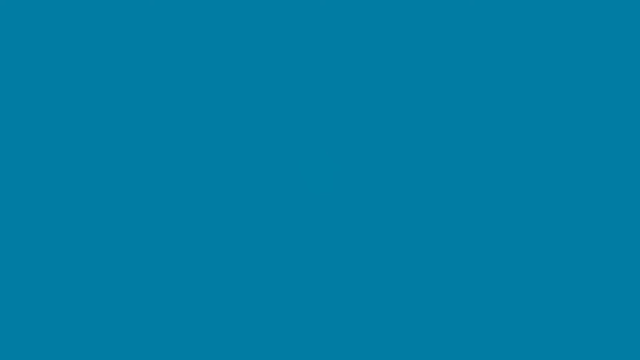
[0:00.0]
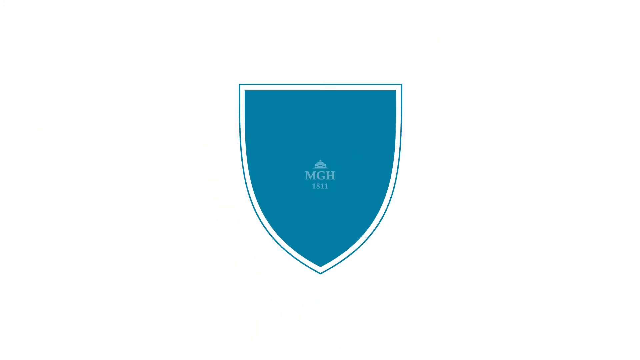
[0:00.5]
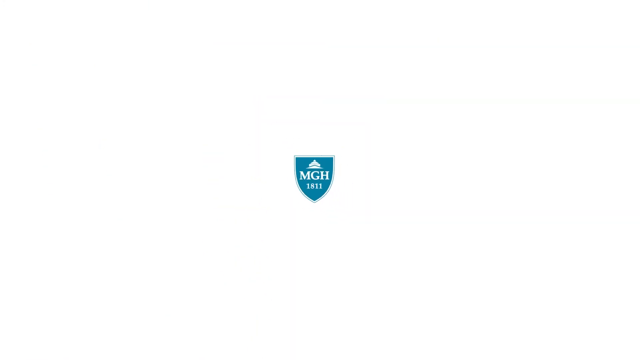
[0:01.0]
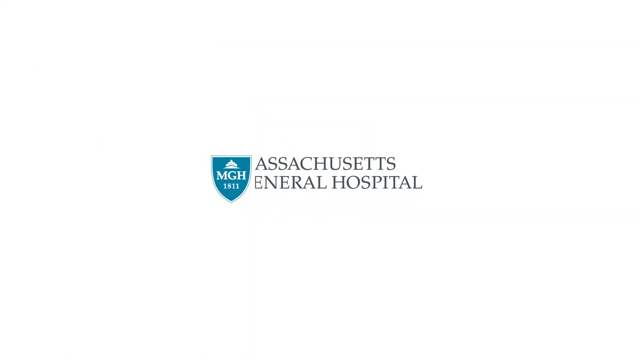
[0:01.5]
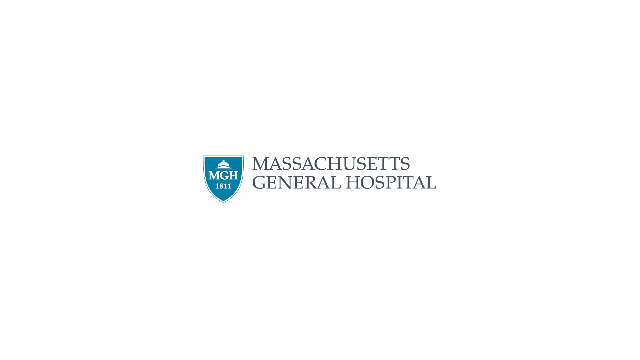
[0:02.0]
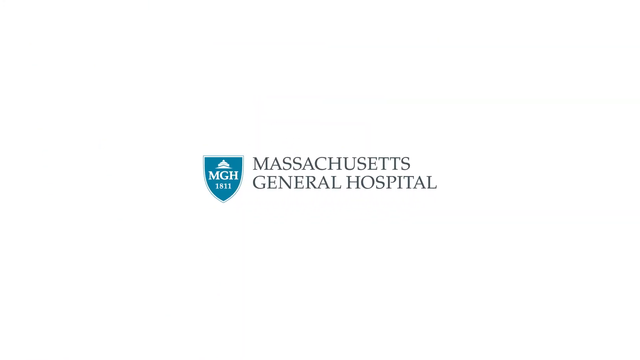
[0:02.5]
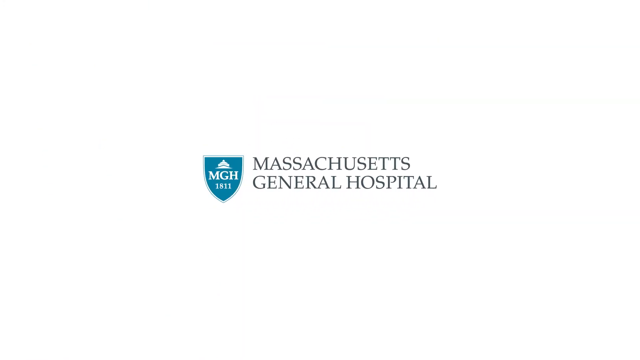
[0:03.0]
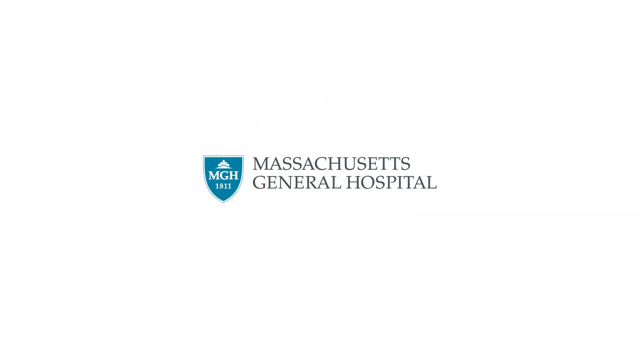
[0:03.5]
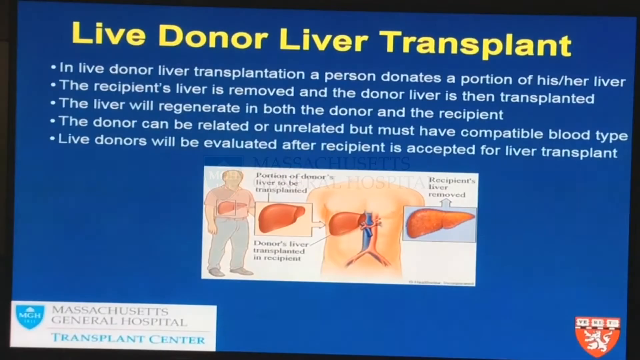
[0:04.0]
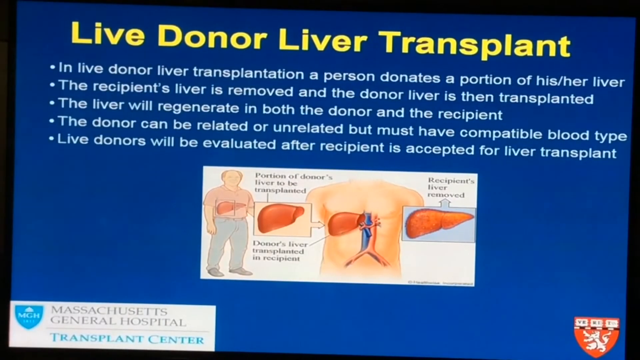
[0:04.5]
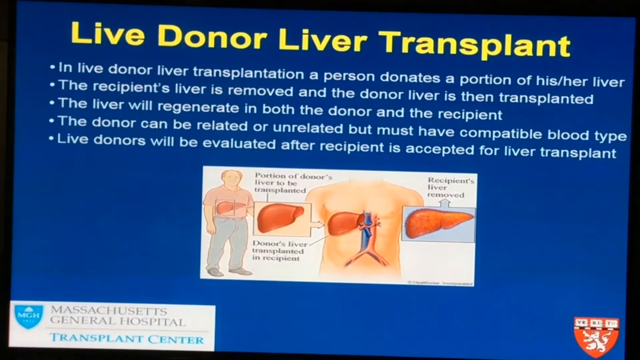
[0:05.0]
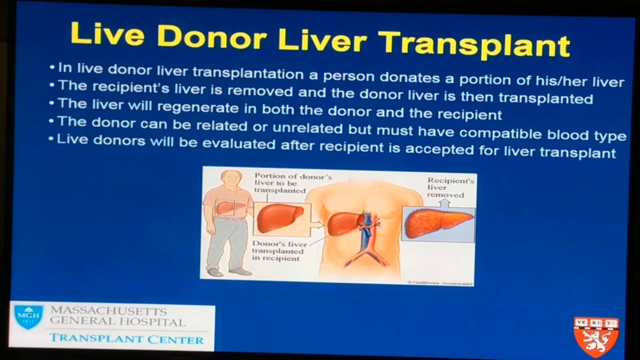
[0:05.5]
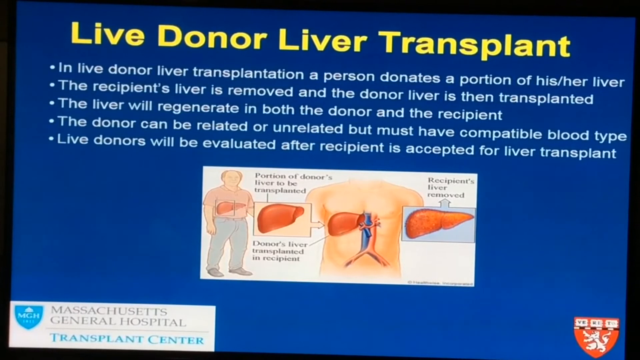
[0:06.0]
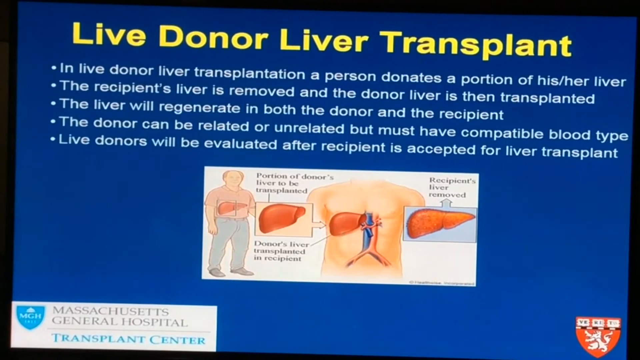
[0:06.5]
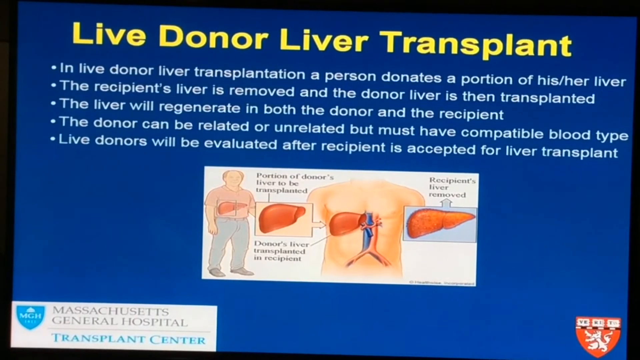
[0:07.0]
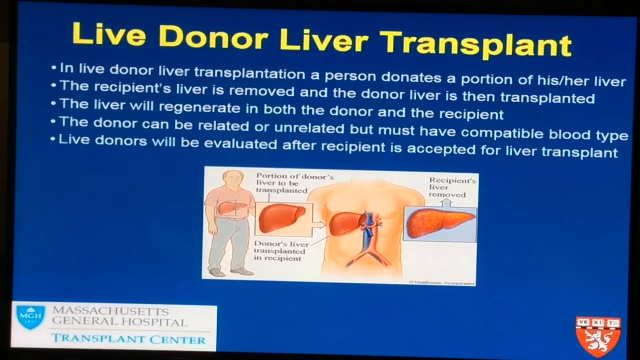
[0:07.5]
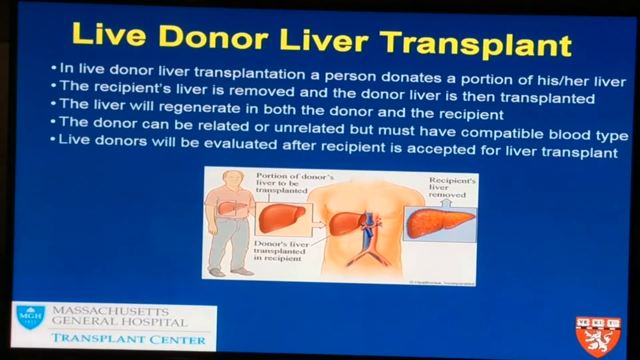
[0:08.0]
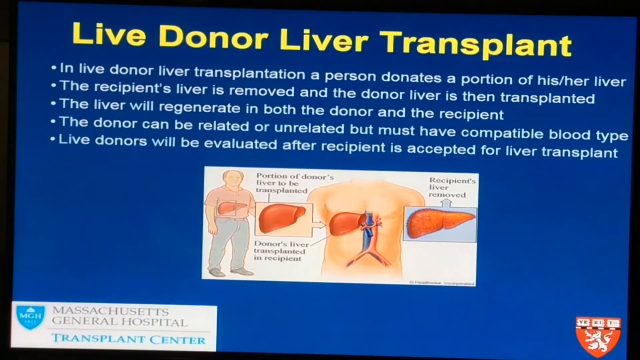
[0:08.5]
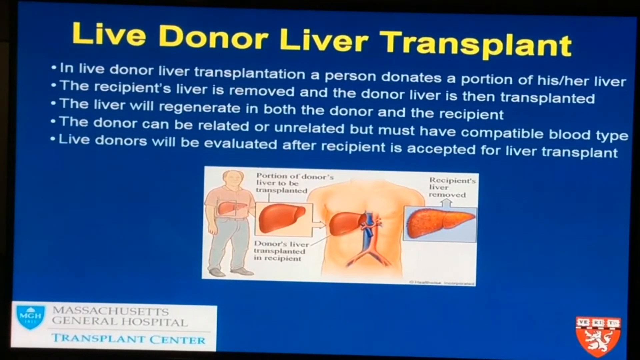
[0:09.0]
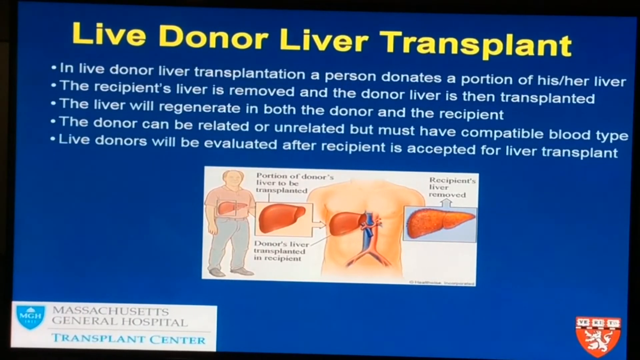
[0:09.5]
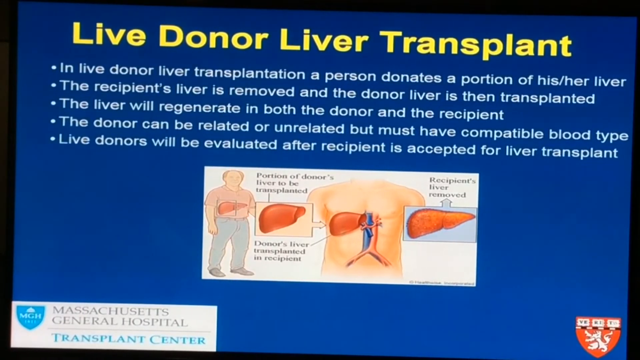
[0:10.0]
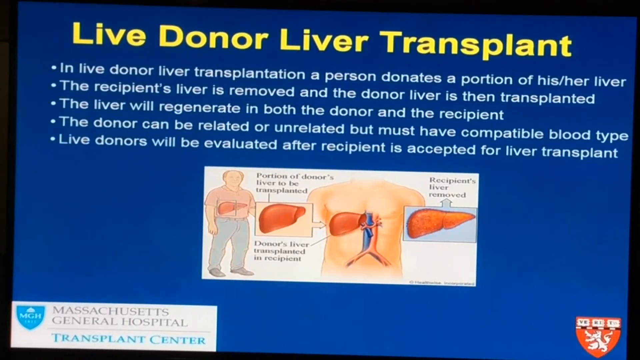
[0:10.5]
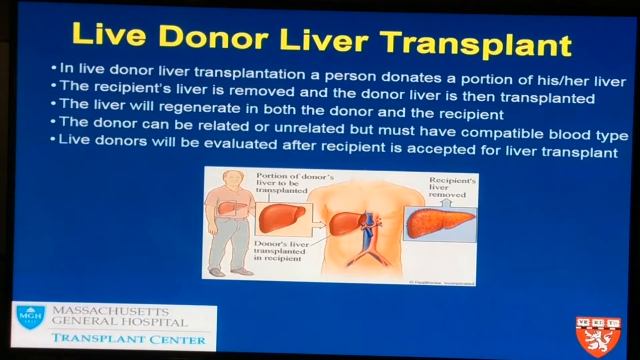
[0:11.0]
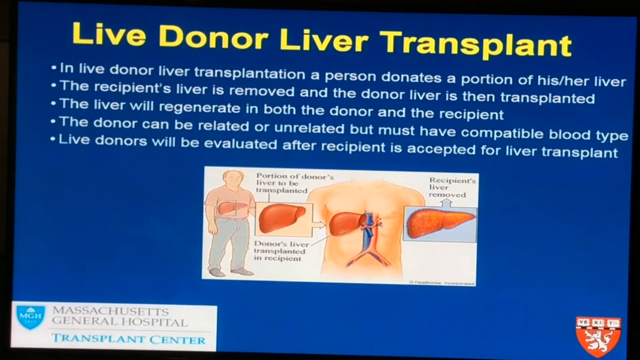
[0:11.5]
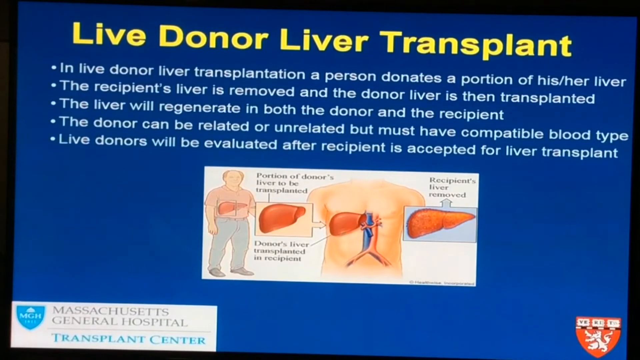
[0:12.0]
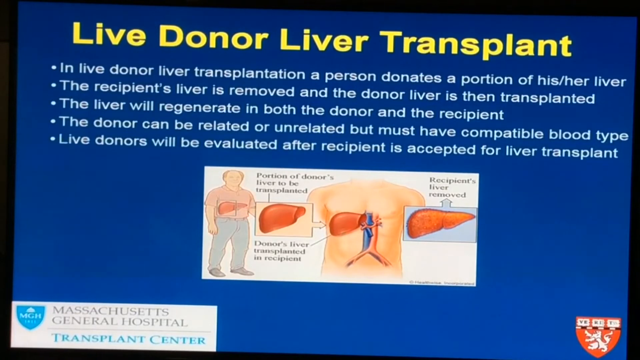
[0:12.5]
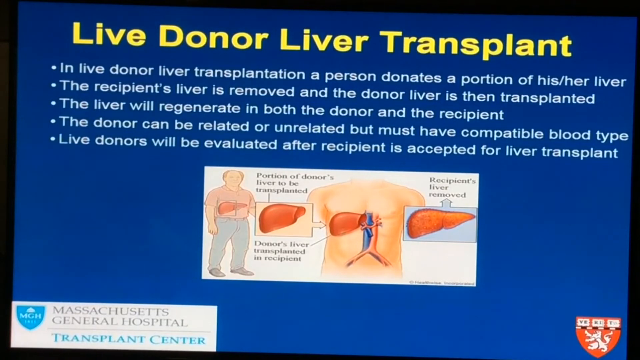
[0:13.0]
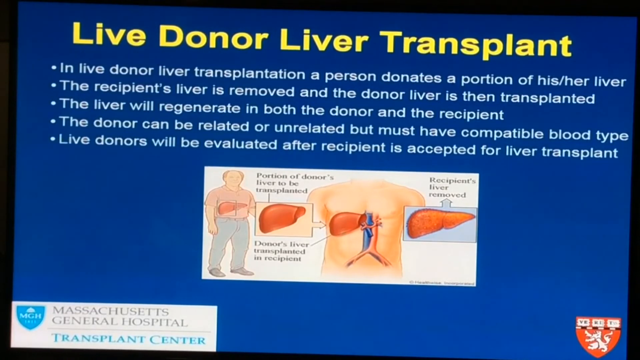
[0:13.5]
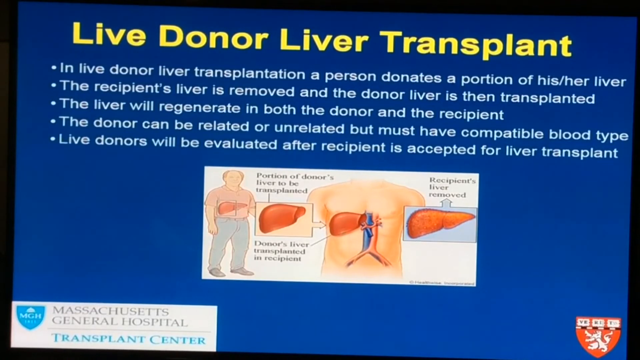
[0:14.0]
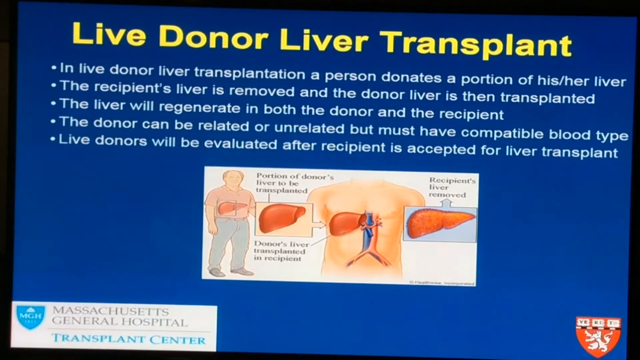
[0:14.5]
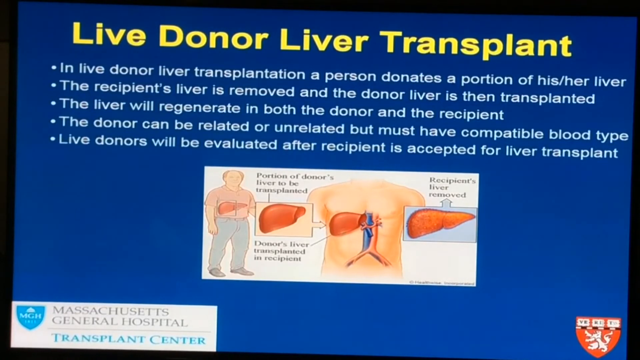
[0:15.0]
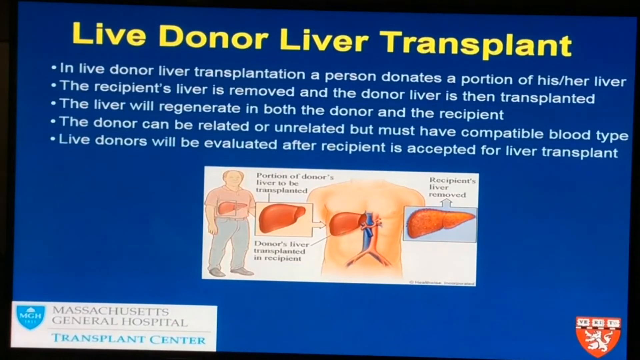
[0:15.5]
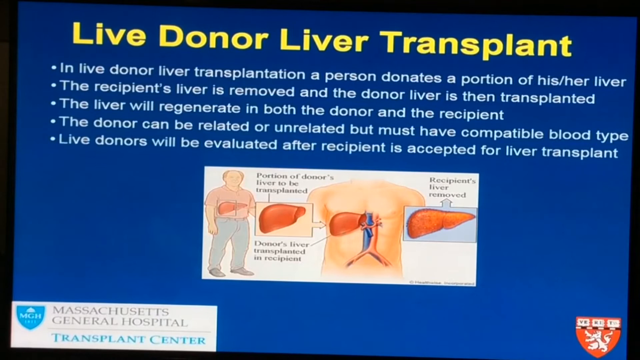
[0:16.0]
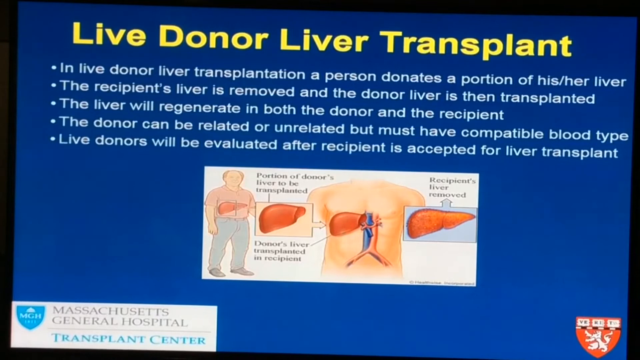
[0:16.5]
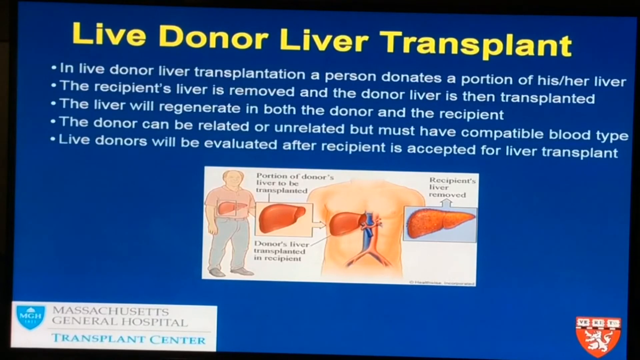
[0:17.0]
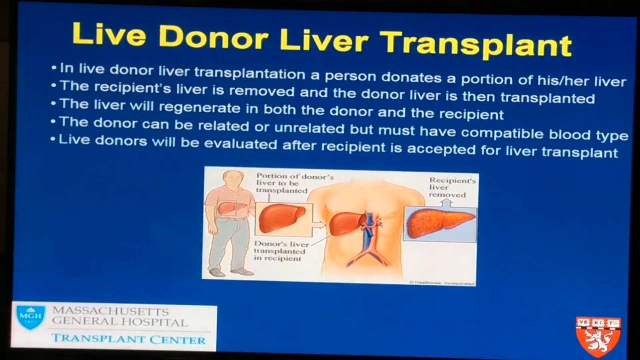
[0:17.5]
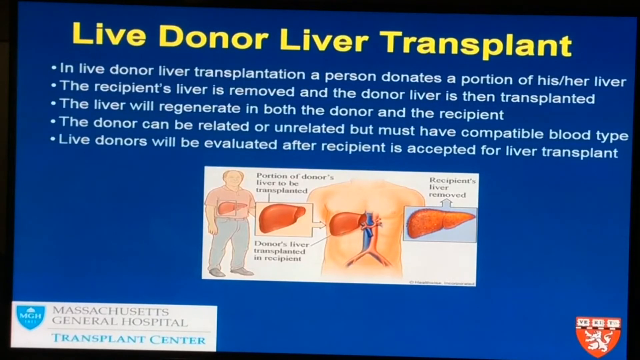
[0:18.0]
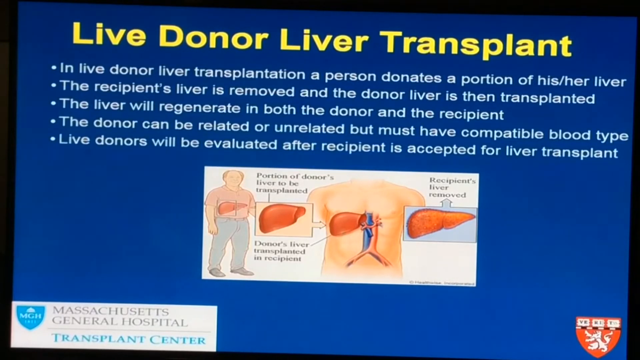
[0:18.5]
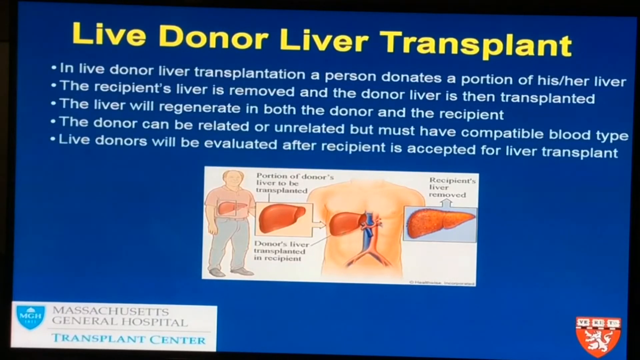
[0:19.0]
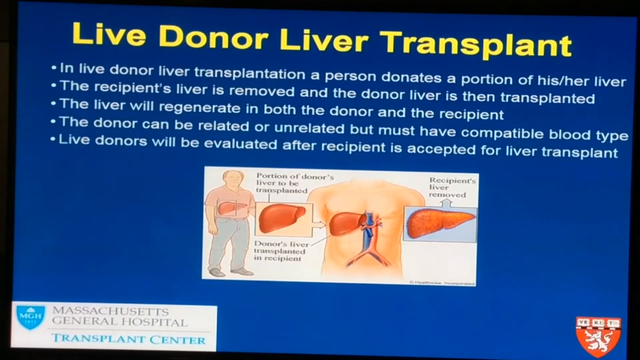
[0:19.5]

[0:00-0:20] The video opens on a blue screen, which folds in from the outside of the screen to form a blue shield in the center. The letters "MGH" appear in white on the shield, along with the number "1811" in white. The shield moves to the left, and black letters to its right read "Massachusetts General Hospital". The view then switches to a blue screen with yellow letters at the top reading "live donor liver transplant". Below "live", five white dots run down the screen, each with a sentence next to it: "in live donor liver transplantation, a person donates a portion of his or her liver"; "the recipient's liver is removed and the donor liver is then transplanted"; "the liver will regenerate in both the donor and the recipient"; "the donor can be related or unrelated, but must have compatible blood type"; and "live donors will be evaluated after recipient is accepted for liver transplant". A depiction of a person's chest and stomach follows, showing a liver on the left and right side. On the left side of the depiction is a man wearing blue jeans, shoes and a pink short-sleeve shirt, and to his right is a depiction of the man's chest.